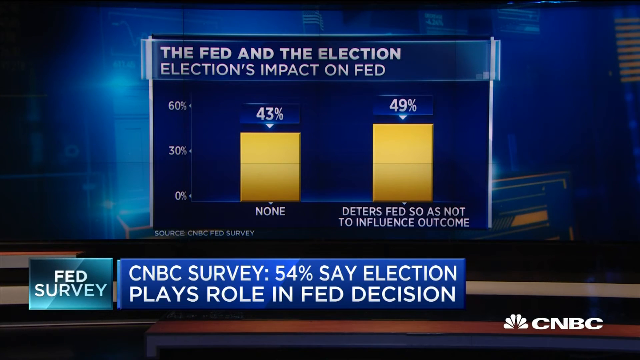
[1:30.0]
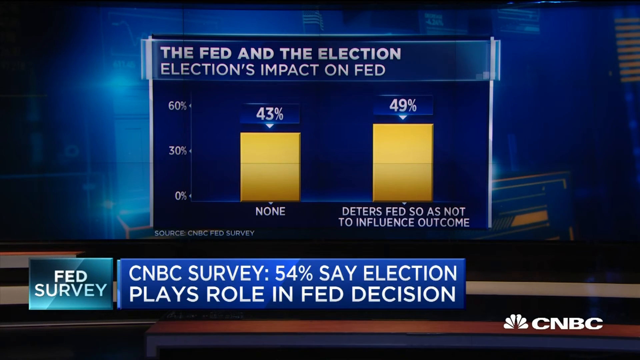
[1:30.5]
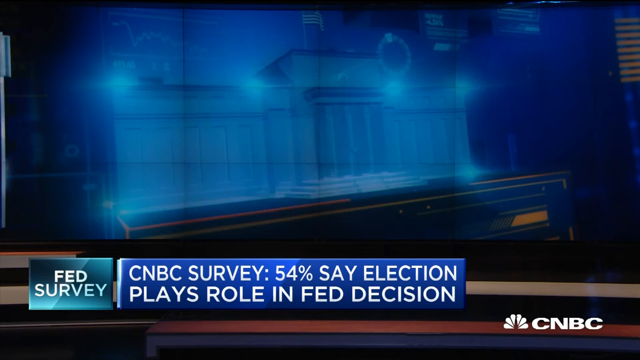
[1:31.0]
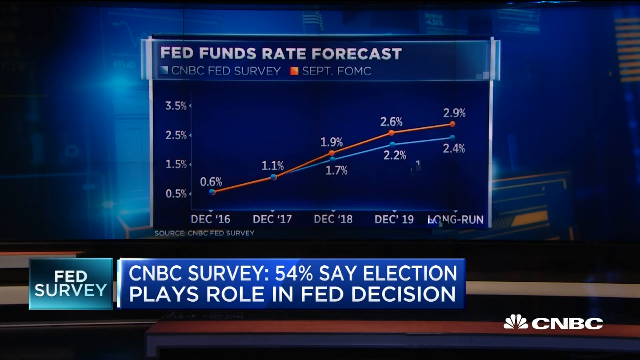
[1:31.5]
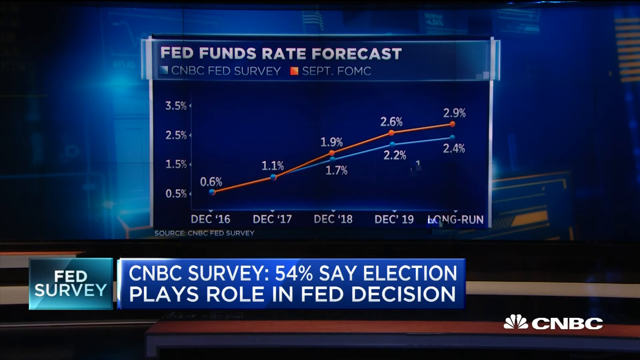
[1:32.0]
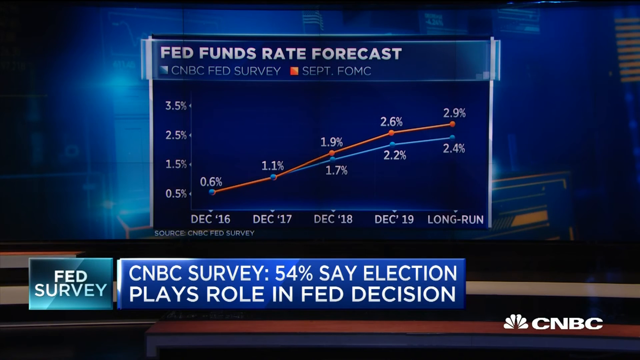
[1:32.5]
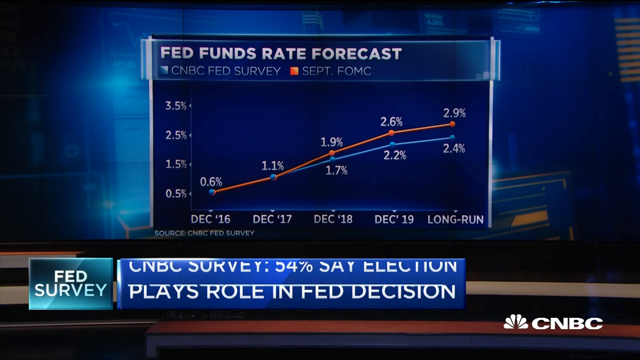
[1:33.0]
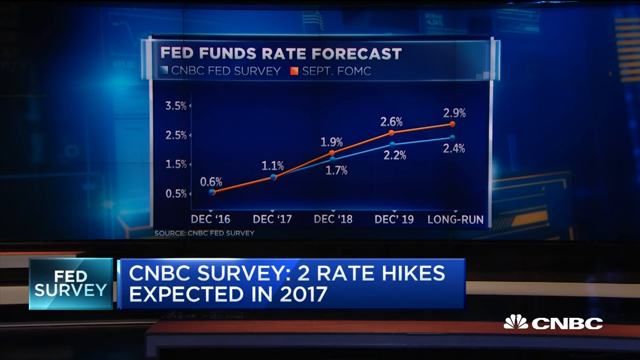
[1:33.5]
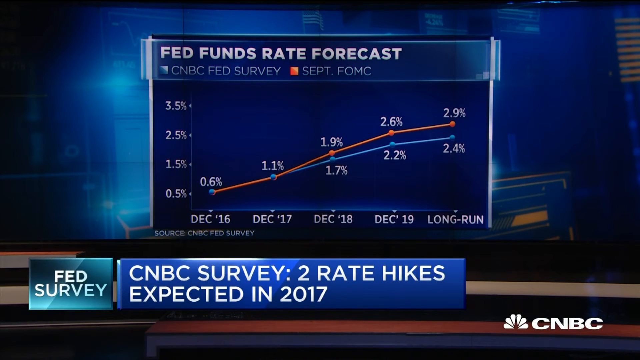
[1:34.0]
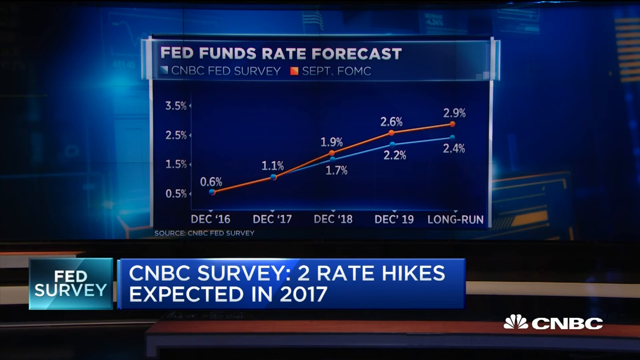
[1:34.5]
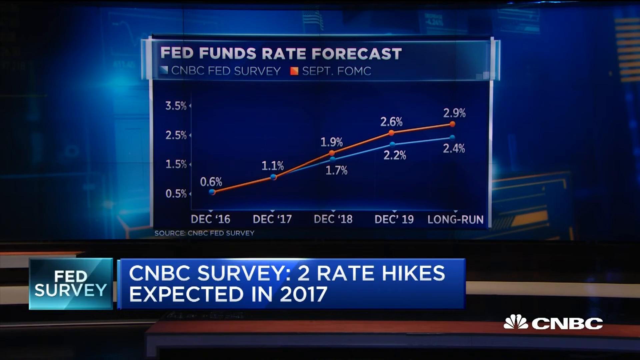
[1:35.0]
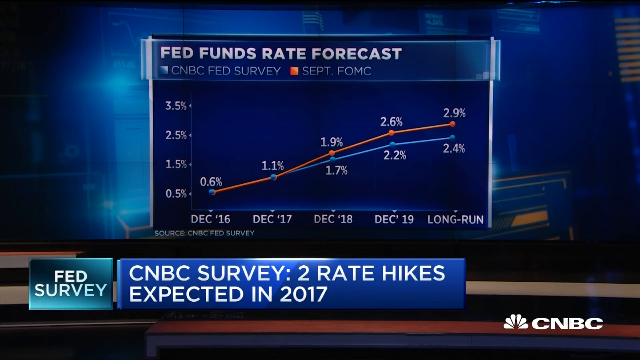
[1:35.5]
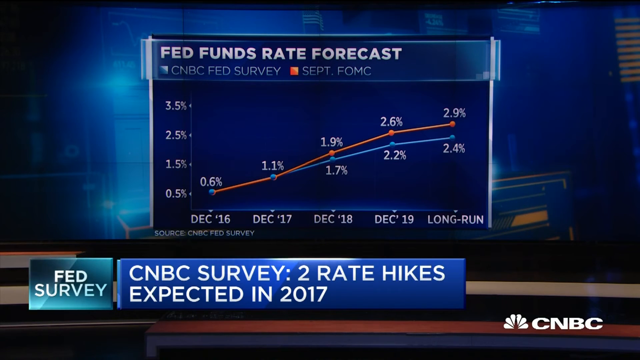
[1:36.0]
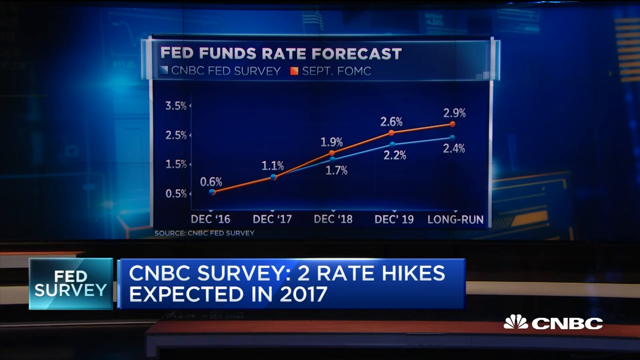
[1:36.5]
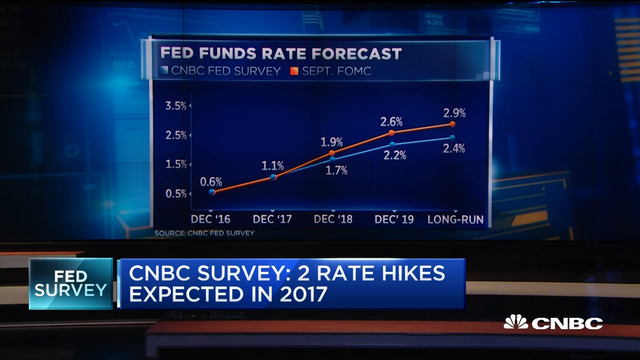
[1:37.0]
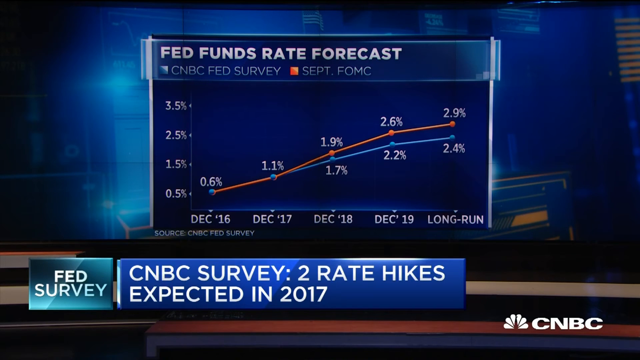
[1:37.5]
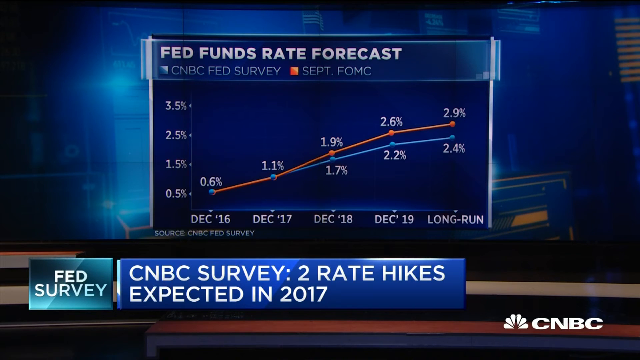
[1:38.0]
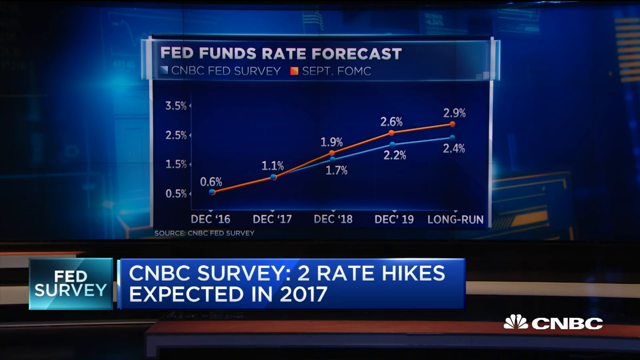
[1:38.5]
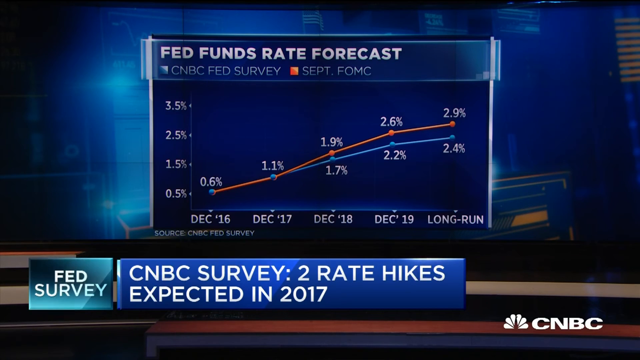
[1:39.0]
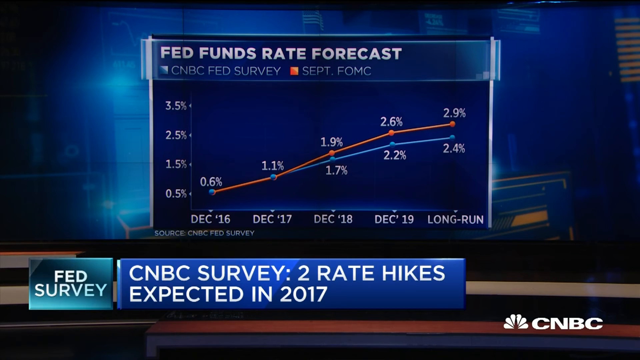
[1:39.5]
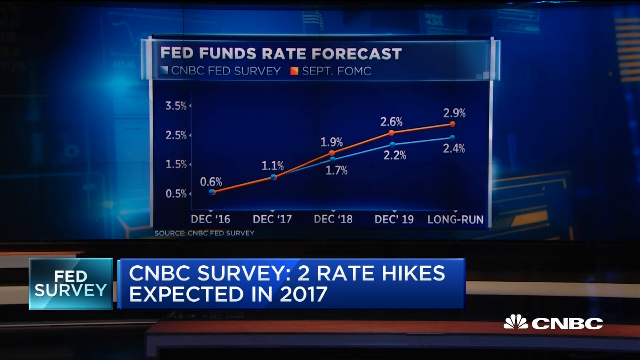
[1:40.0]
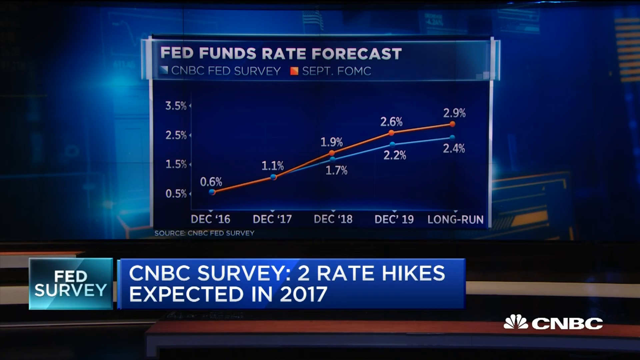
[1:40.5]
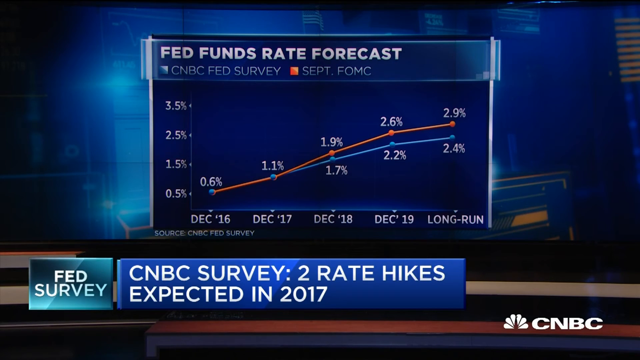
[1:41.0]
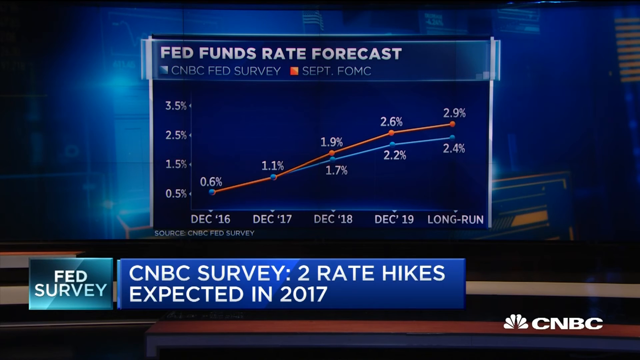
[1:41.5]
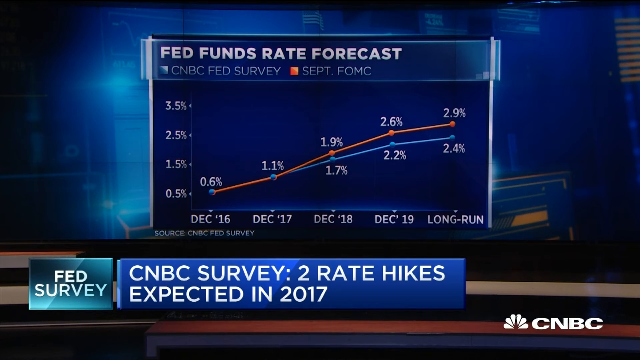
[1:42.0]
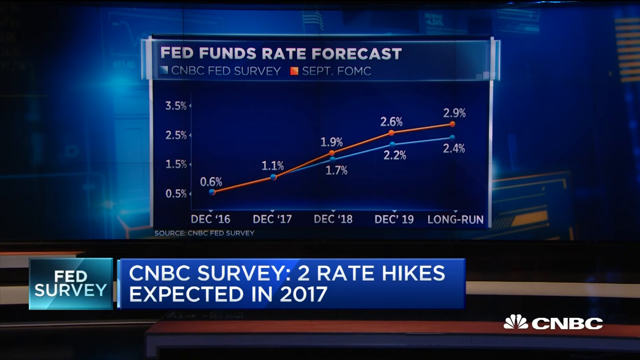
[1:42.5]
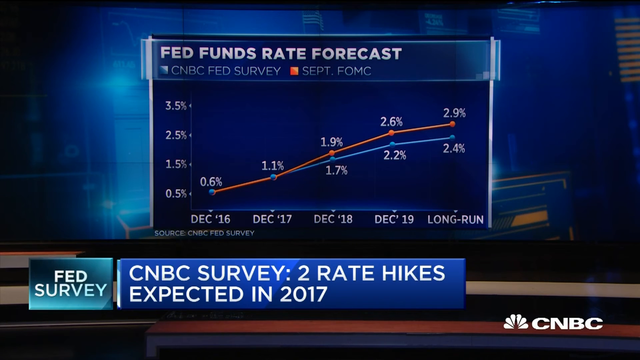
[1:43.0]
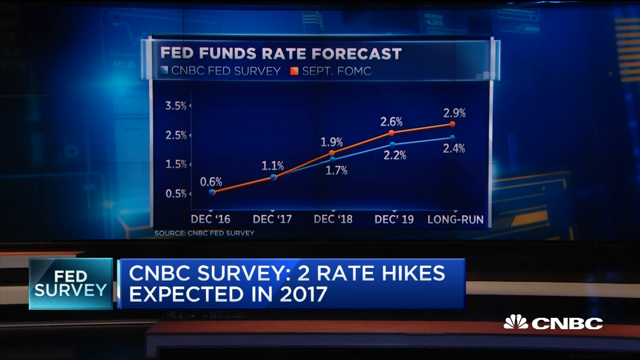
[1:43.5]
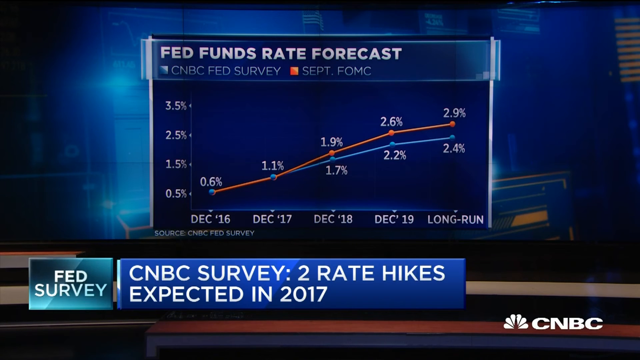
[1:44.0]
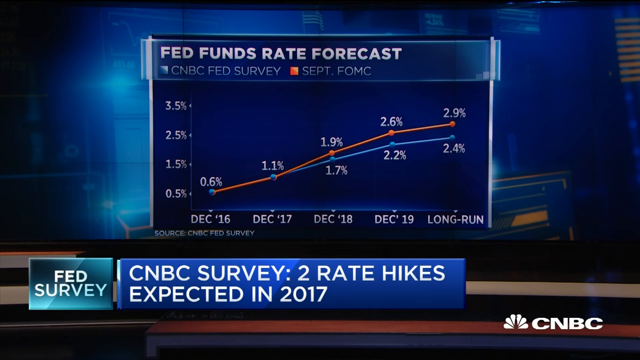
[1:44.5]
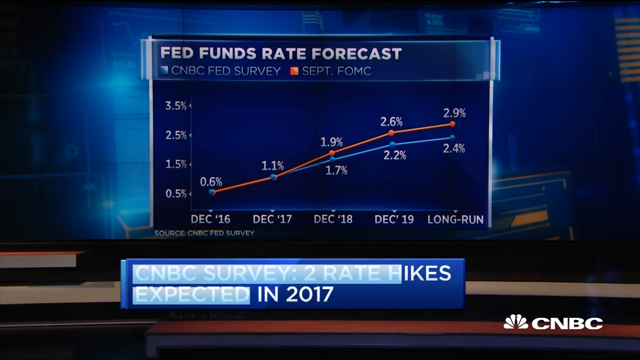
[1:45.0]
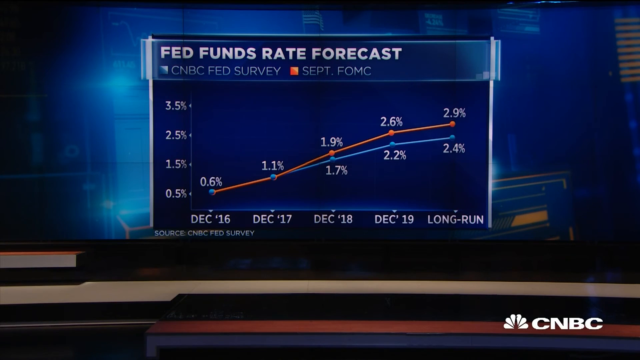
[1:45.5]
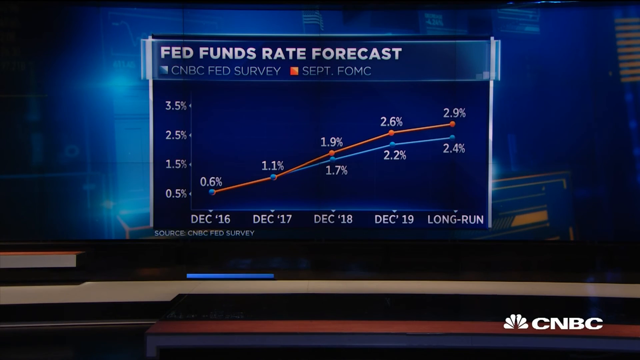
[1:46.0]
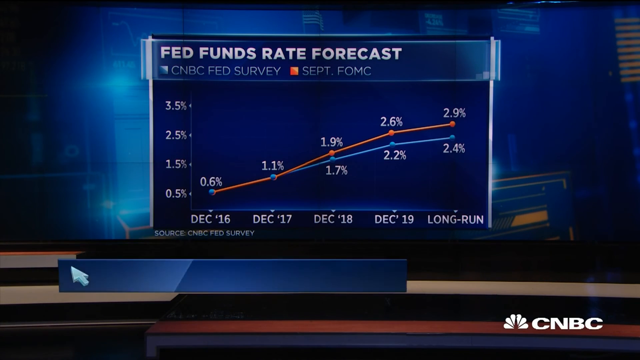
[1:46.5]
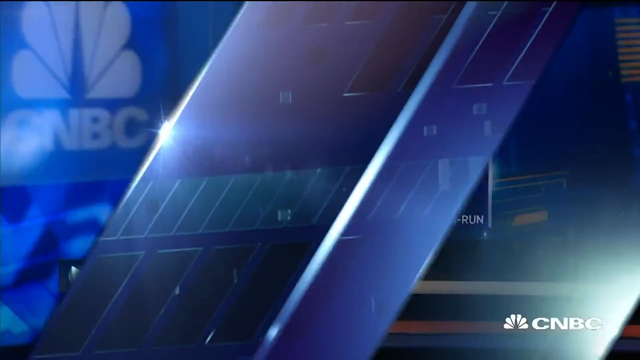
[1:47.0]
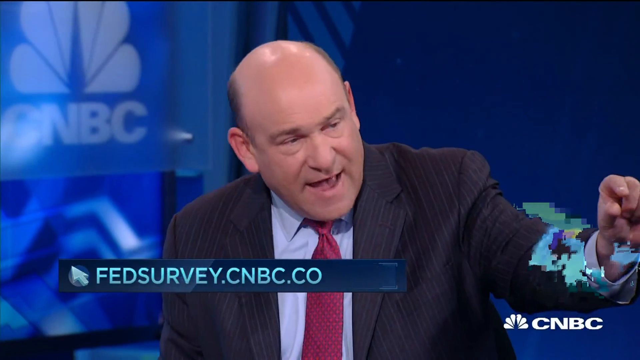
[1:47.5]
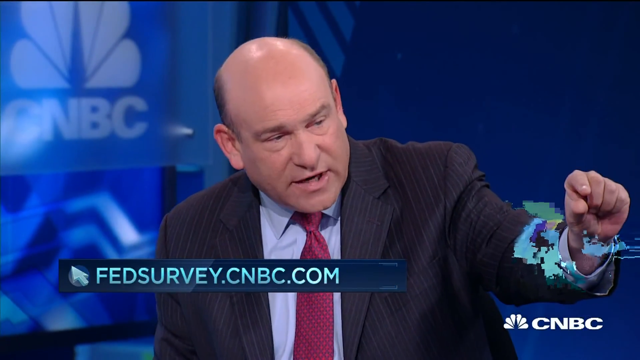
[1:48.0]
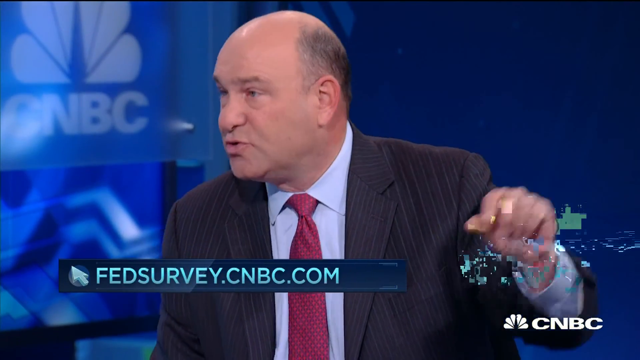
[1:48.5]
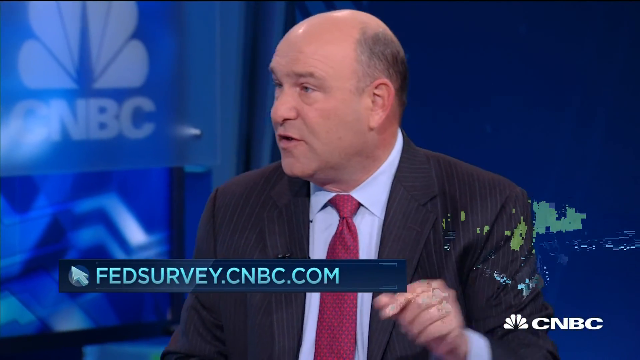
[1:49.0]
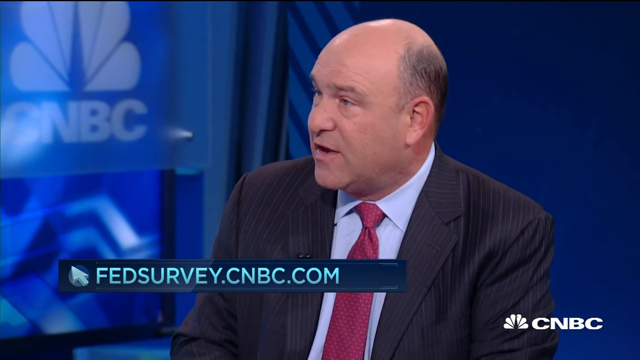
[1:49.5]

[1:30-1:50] "The Fed and the election" is shown with "elections impact on Fed" underneath. A bar chart has two bars: one at 43 percent with "none" written underneath, and one at 49 percent with text underneath ending "Fed so as not to influence outcome". Beside them are 0, 30, and 60 percent markings. The source is given as CNBC Fed survey, and a line reads "CNBC survey 54 percent say election" plays role in Fed decision. The program is "Fed survey". Another graphic follows, a Fed funds rate forecast from the CNBC Fed survey and September FOMC, with values of 3.5 percent, 4.5 percent, 1.5 percent, and 0.5 percent. The chart shows an increase up to 2.9 percent: starting at December 16 at 0.6 percent, December 17 at 1.1 percent, December 18 at 1.9 percent, and December 19 at 2.6 percent. For December 18 the graph shows 1.7 with a red graph on top showing 1.9 percent; for December 19 the blue line shows 2.2 with the red above it at 2.6 percent; for the long run the red graph shows 2.9 percent and the blue graph beneath shows 2.4 percent. A CNBC survey line indicates two rate hikes expected in 2017.